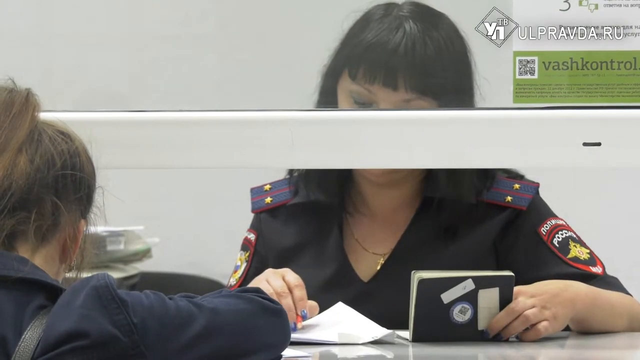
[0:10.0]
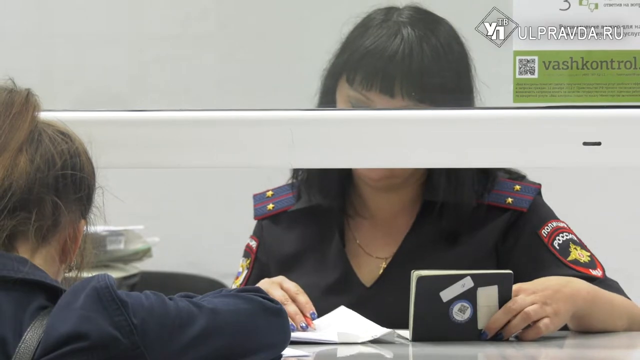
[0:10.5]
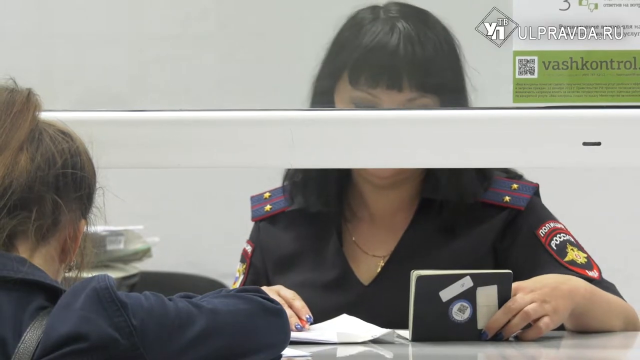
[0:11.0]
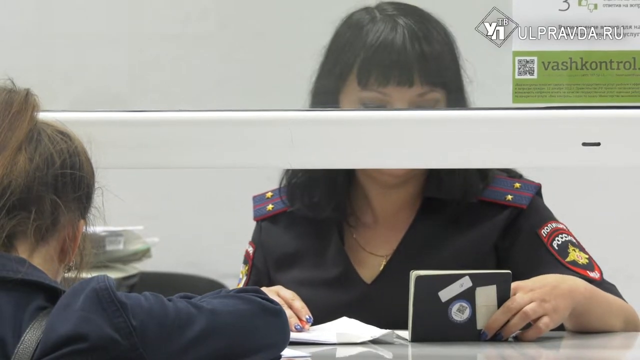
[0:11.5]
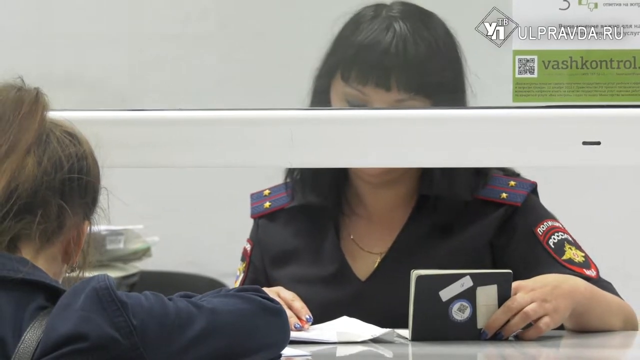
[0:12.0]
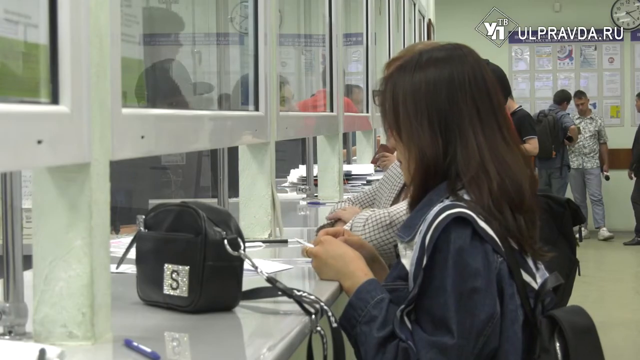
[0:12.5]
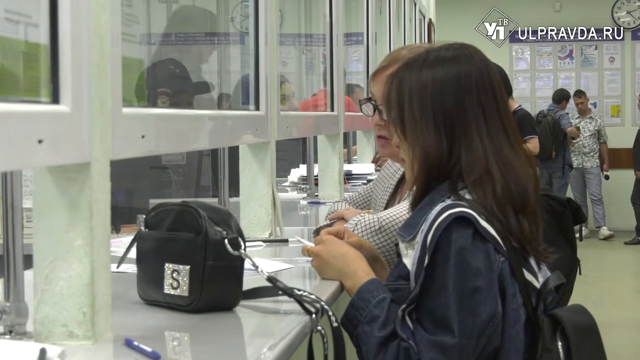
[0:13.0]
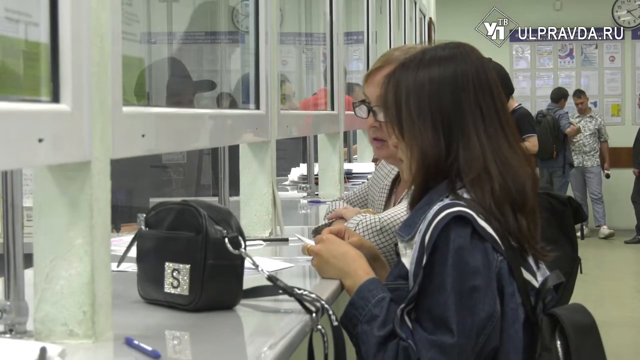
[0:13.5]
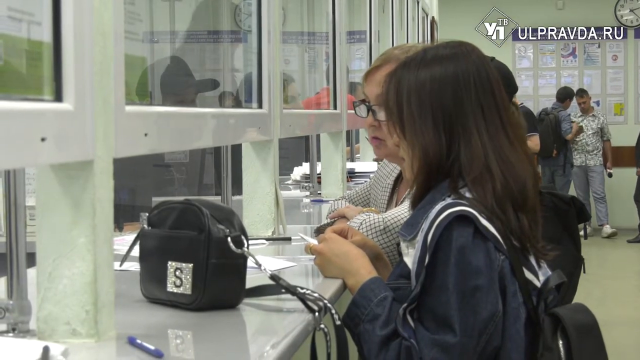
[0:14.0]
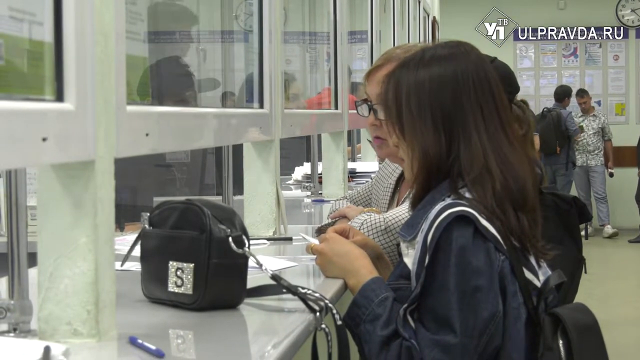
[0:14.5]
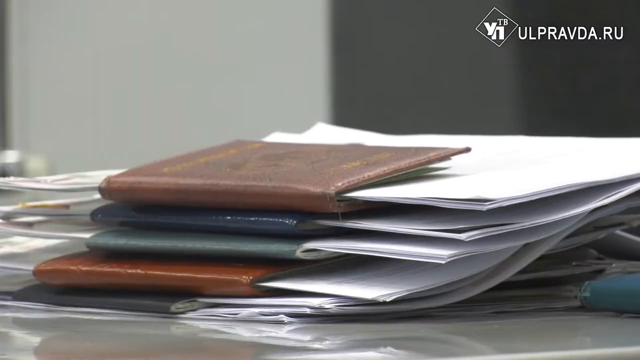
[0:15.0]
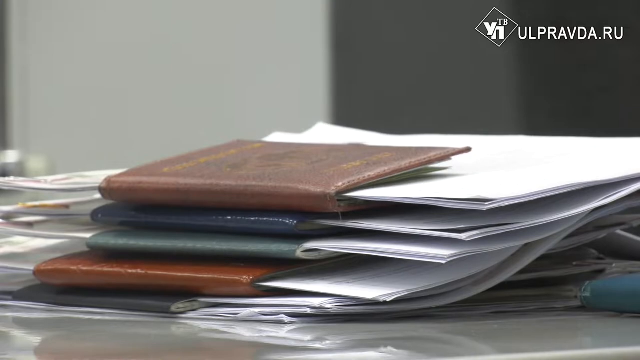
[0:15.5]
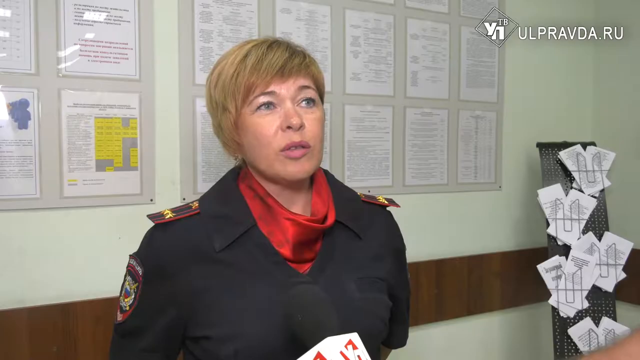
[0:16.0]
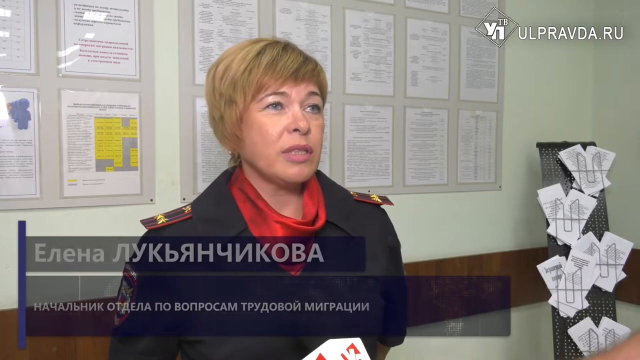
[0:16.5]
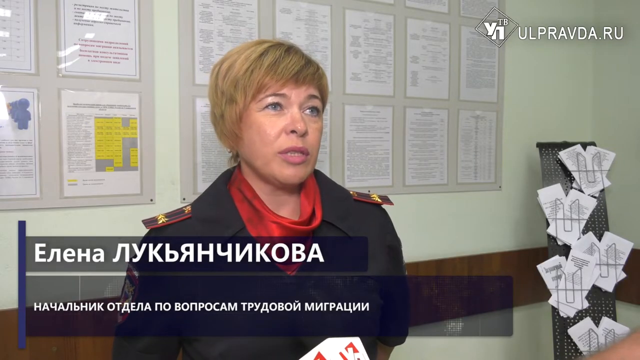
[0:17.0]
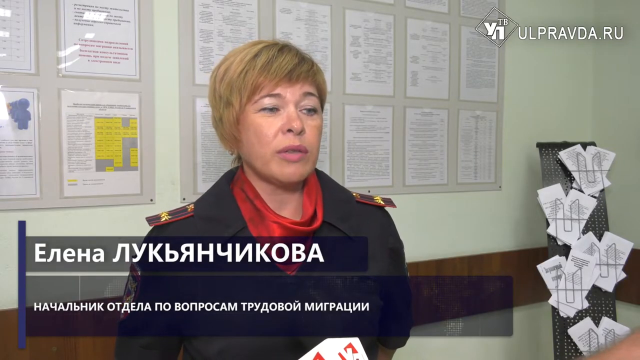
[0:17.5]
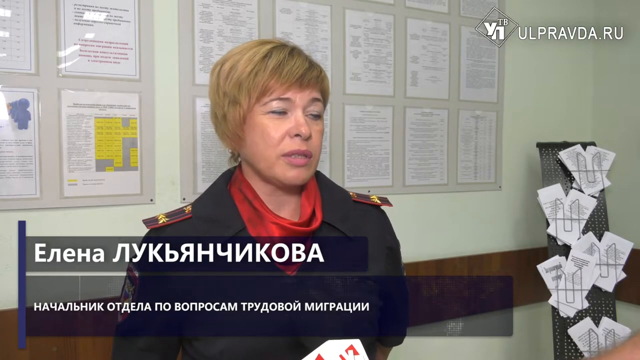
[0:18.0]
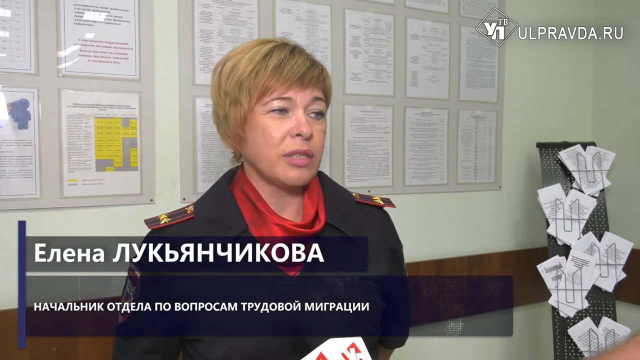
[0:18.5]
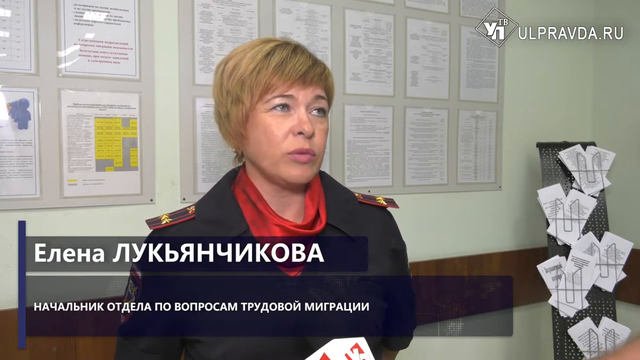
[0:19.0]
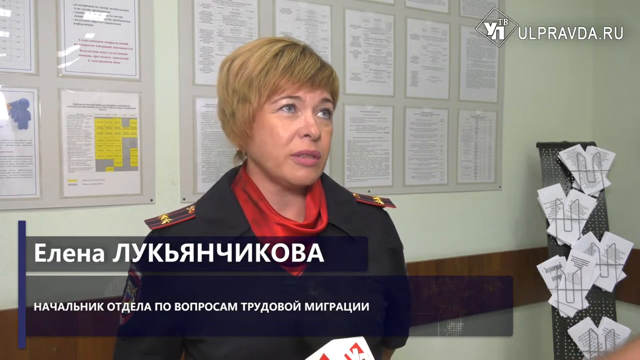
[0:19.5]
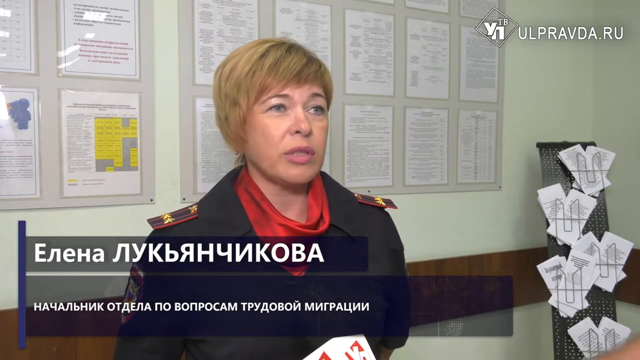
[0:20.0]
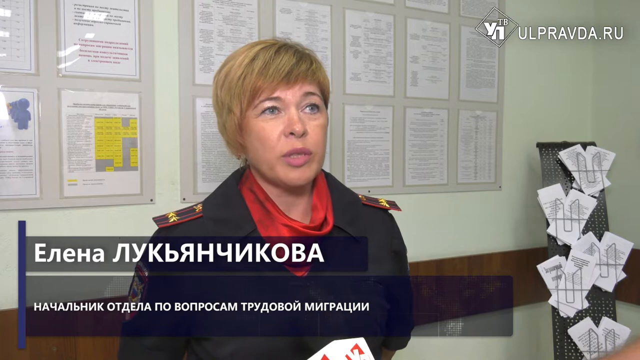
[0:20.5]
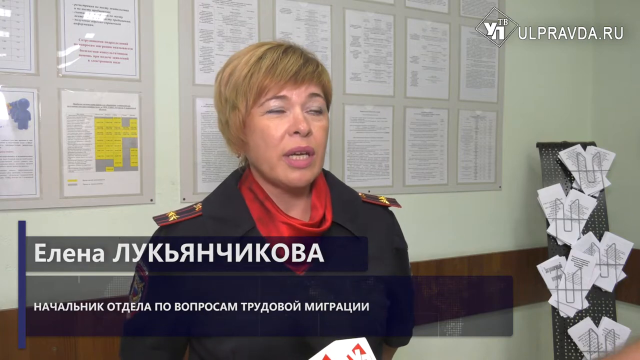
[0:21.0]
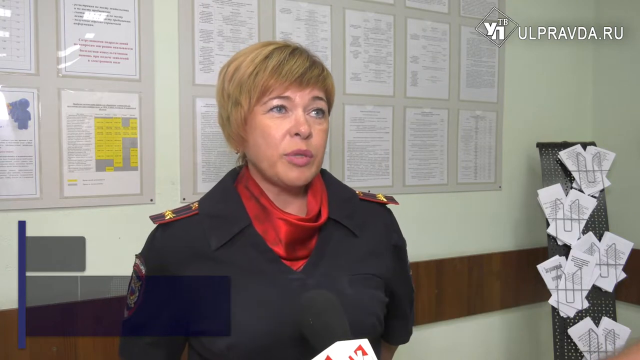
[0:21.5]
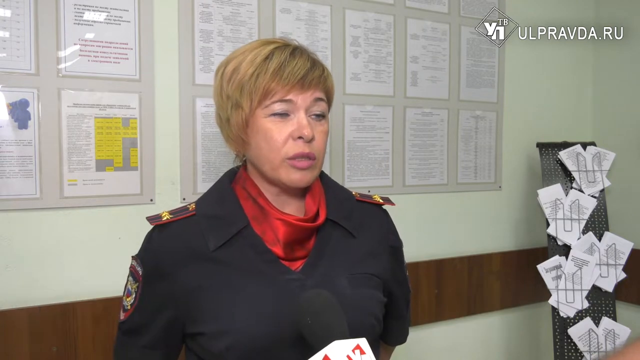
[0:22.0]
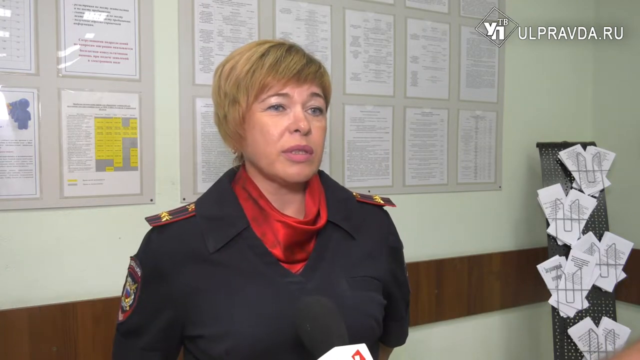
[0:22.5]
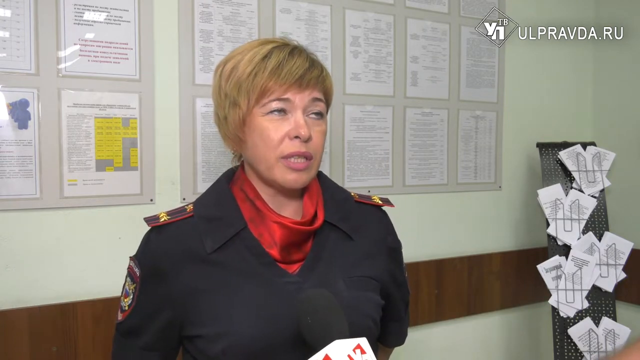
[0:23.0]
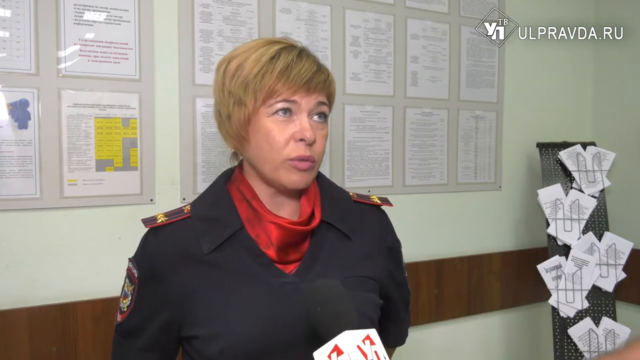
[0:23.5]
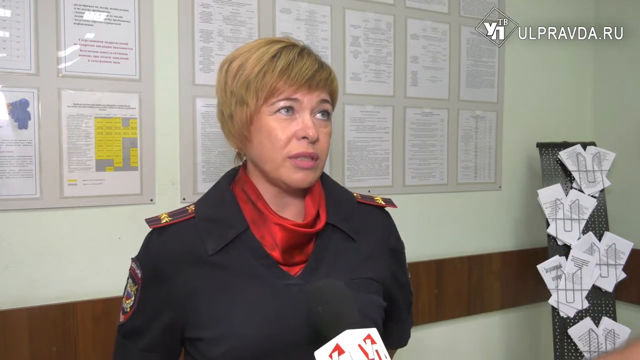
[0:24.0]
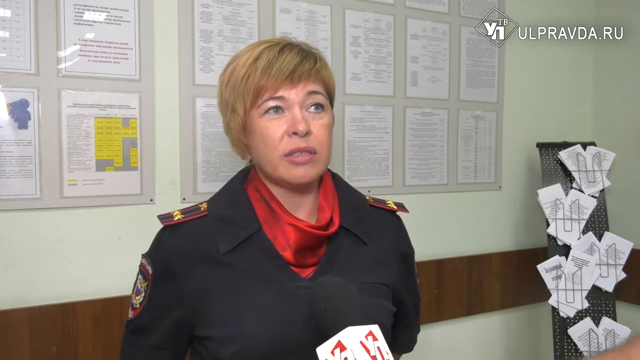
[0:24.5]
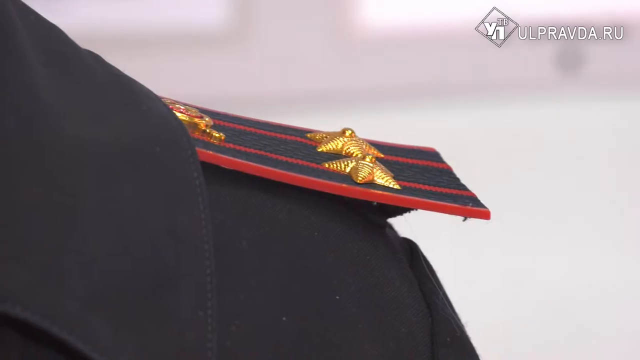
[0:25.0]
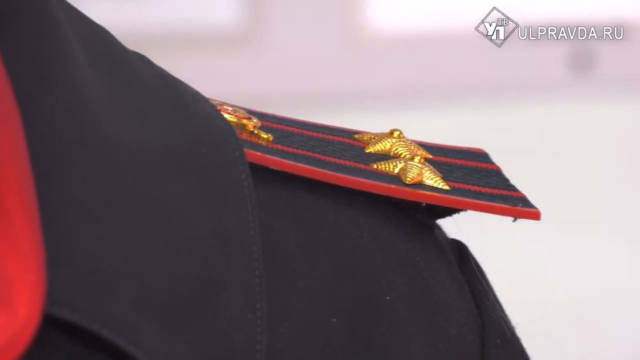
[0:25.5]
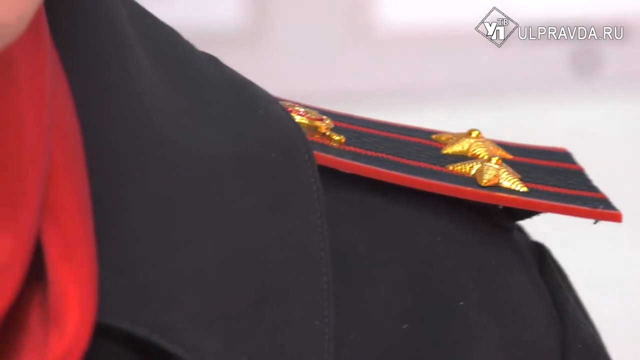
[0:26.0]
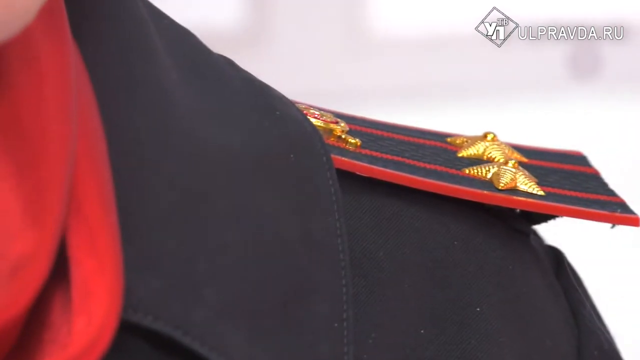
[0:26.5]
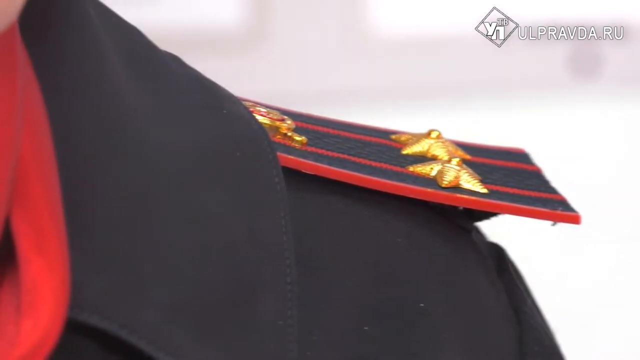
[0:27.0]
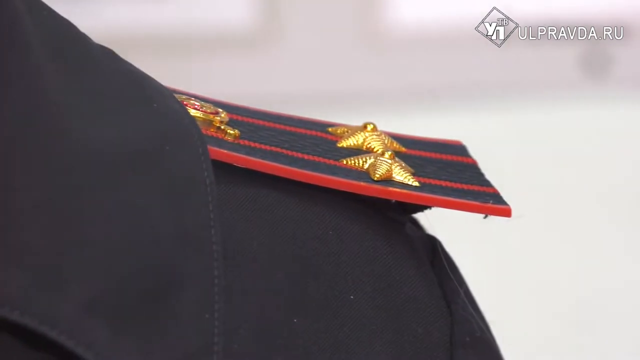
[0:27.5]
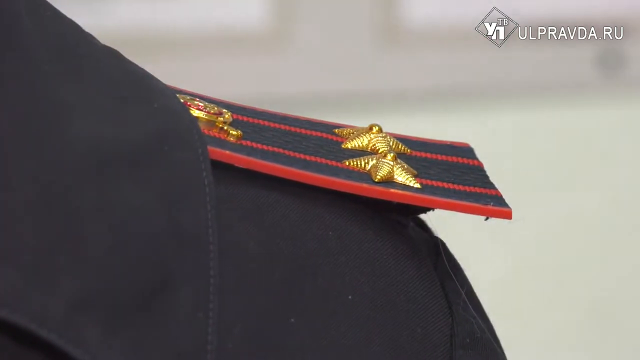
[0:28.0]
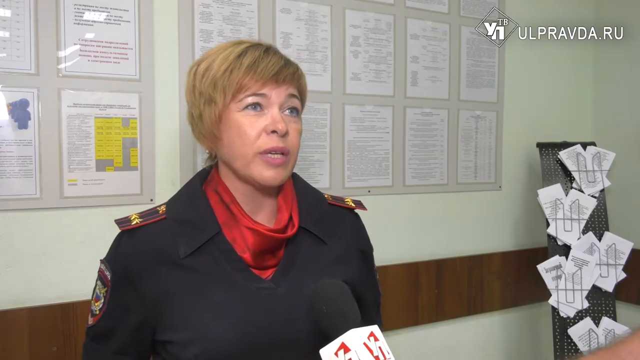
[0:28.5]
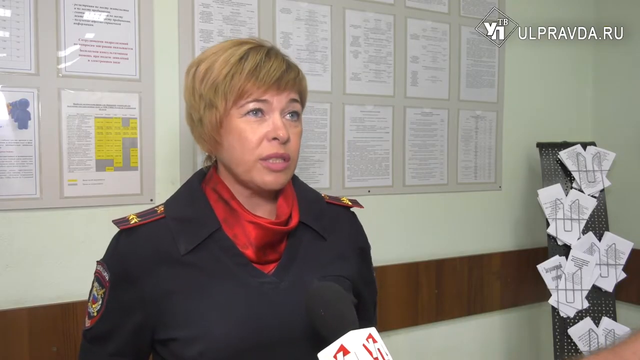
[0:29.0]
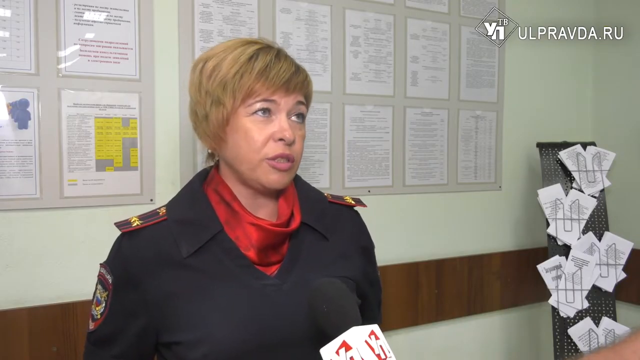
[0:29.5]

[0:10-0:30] Two women are on opposite sides of the screen, and a group of women on one side is separated from the women on the other side by a large panel of glass. A microphone is brought up to one of the women for an interview. The text "ulpravda.ru" is in the top right-hand corner of the screen, suggesting the setting is very likely Russia. The people, who are Caucasian and very likely Russian, wait patiently to get through to the other side.